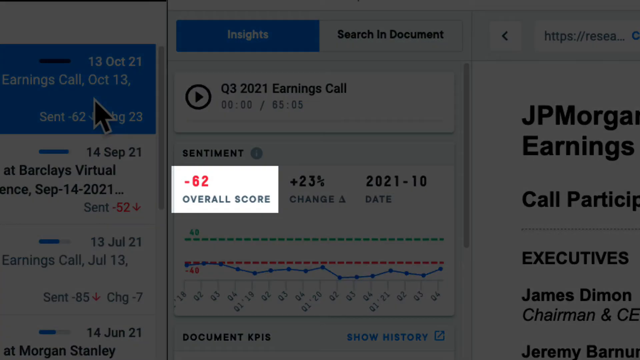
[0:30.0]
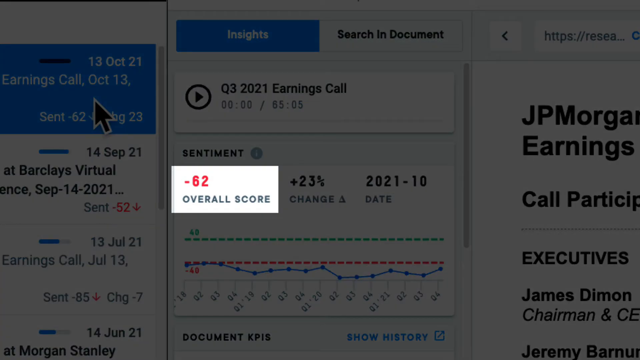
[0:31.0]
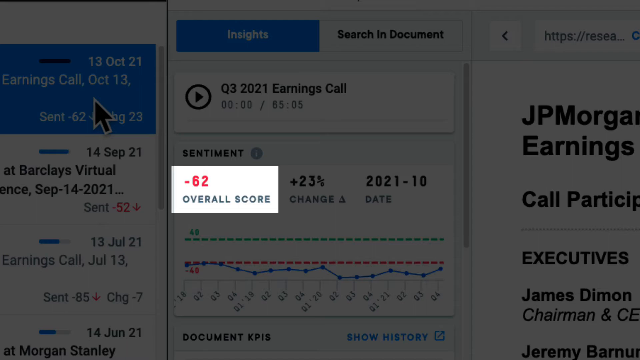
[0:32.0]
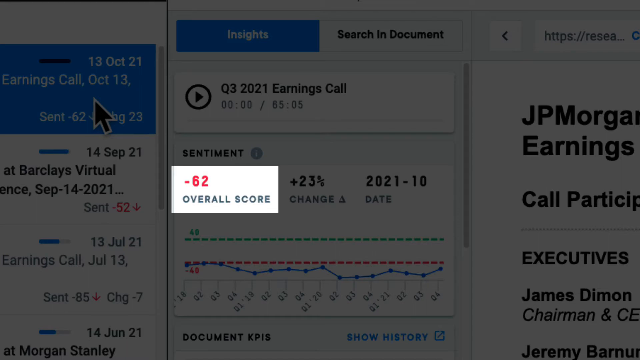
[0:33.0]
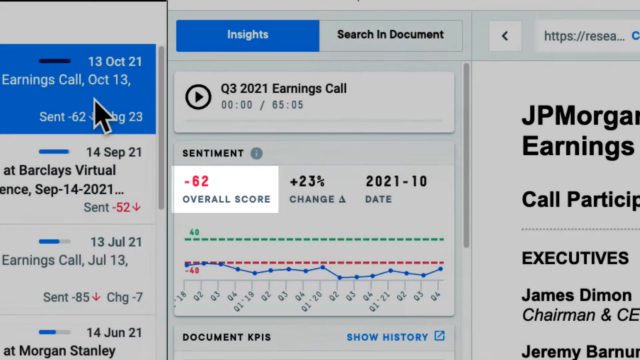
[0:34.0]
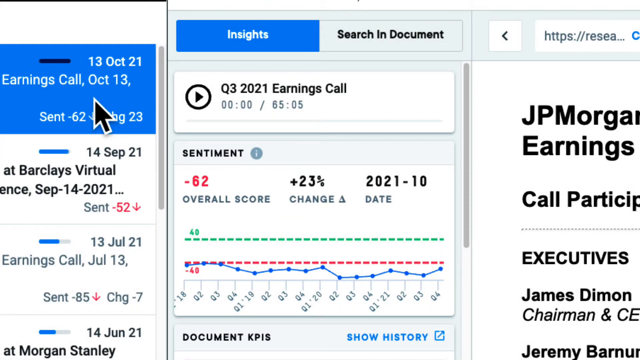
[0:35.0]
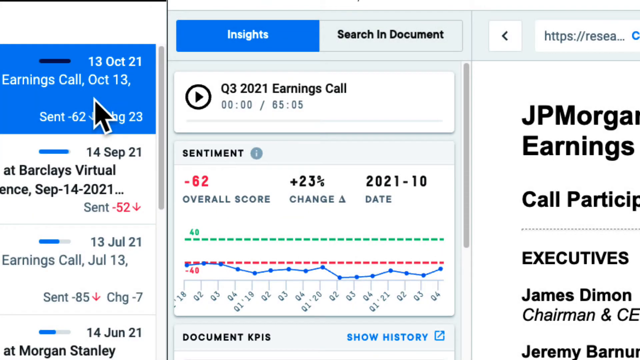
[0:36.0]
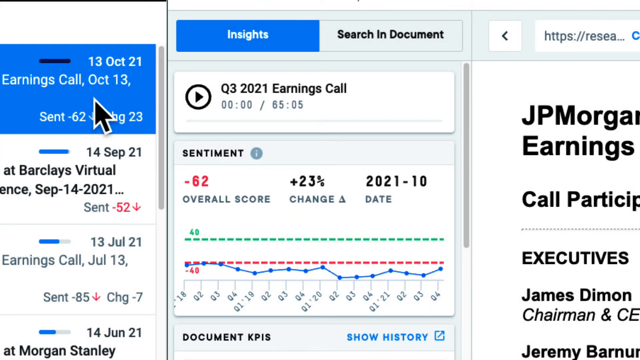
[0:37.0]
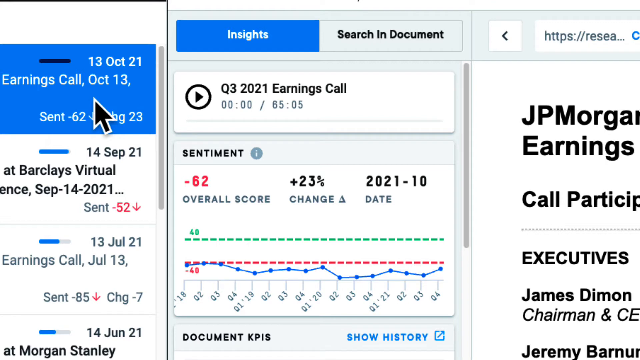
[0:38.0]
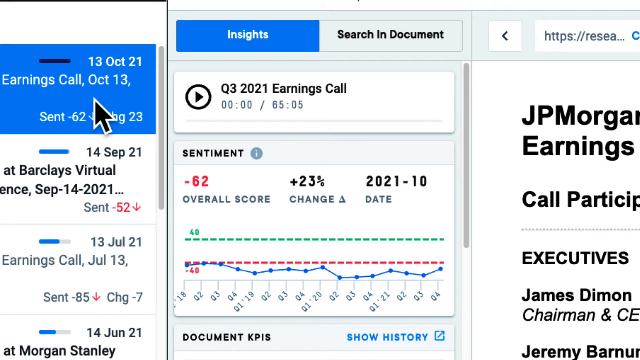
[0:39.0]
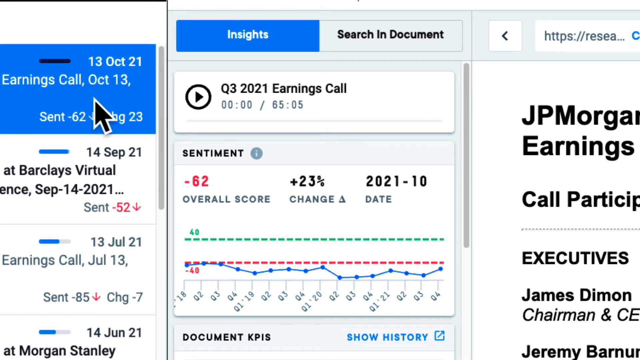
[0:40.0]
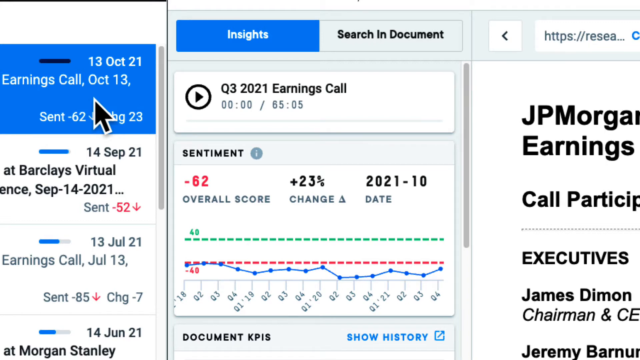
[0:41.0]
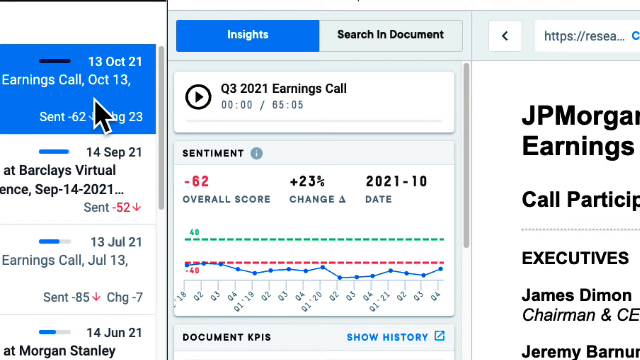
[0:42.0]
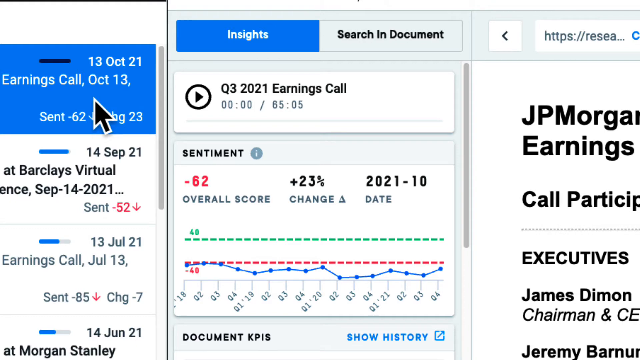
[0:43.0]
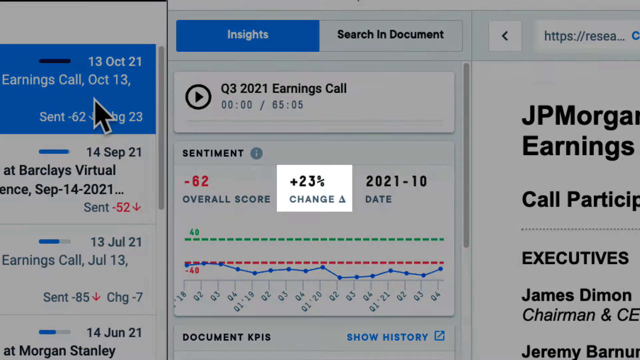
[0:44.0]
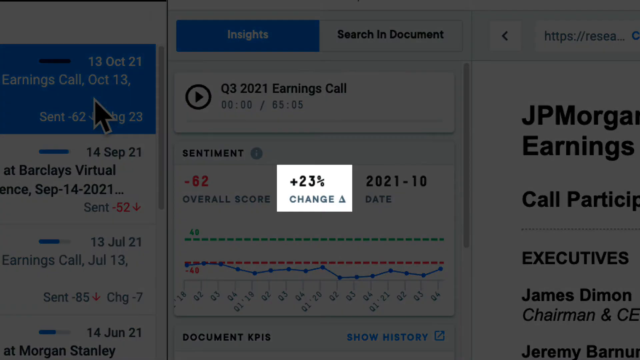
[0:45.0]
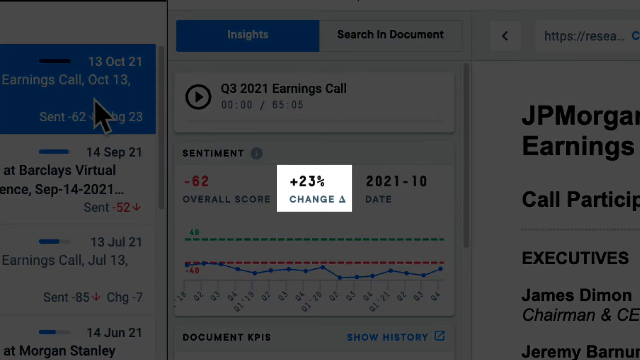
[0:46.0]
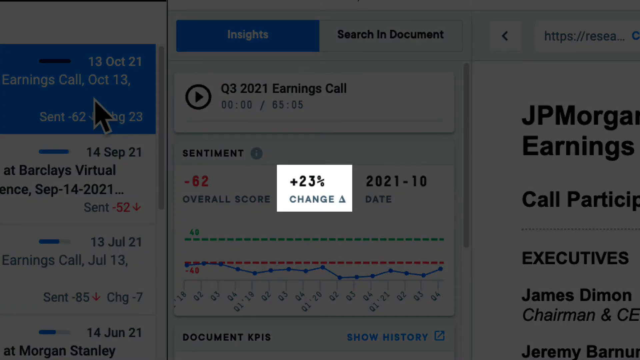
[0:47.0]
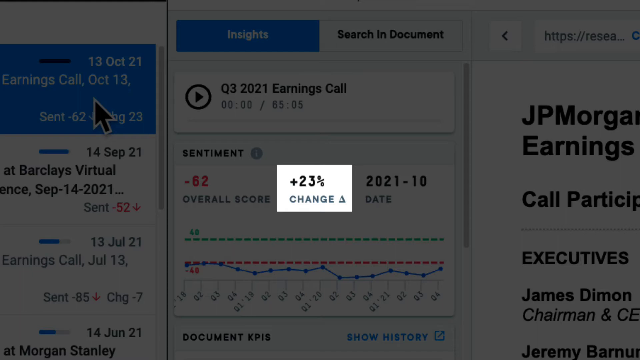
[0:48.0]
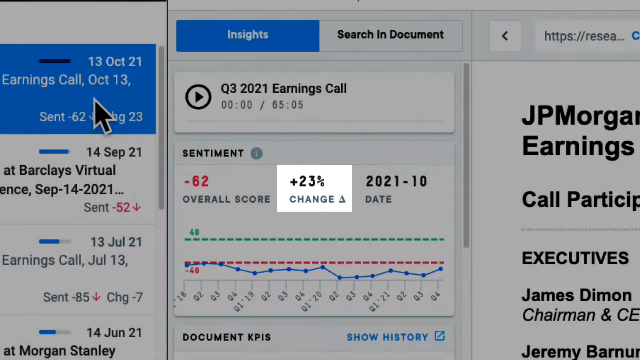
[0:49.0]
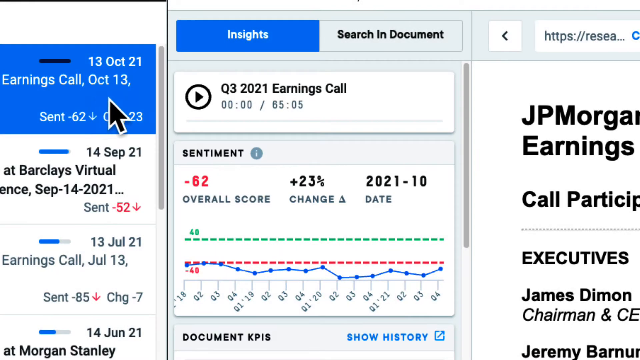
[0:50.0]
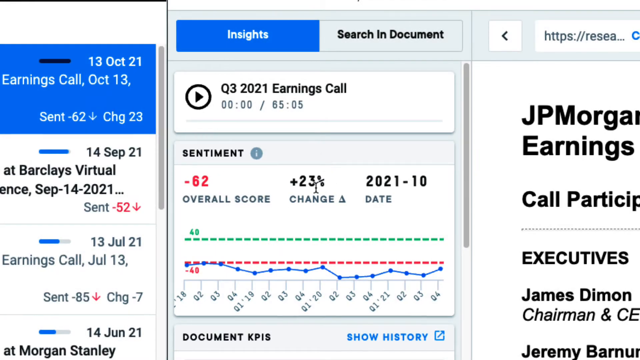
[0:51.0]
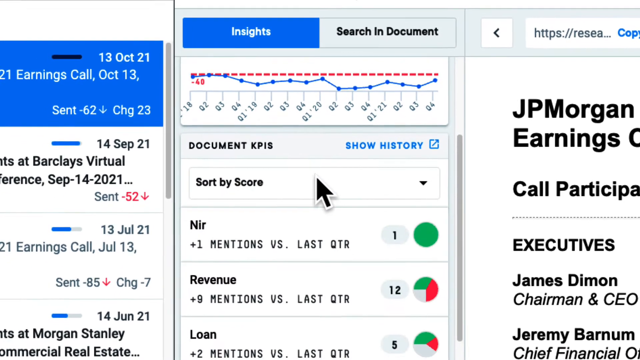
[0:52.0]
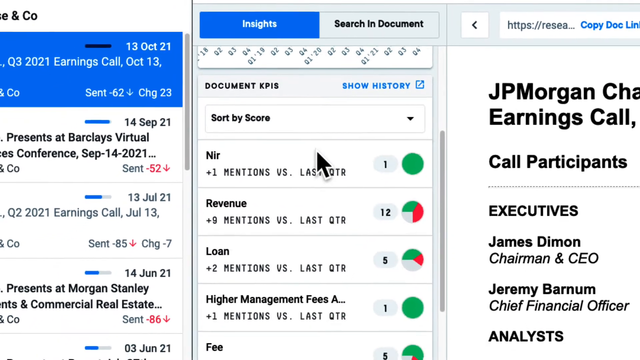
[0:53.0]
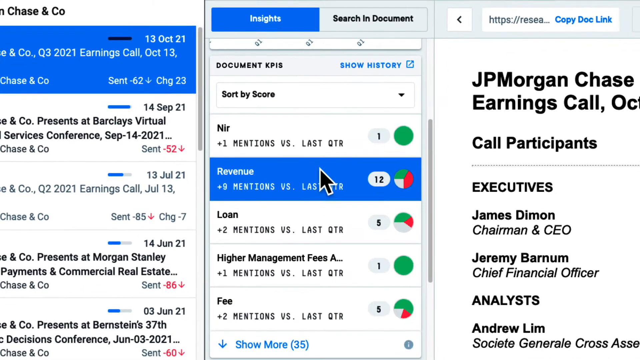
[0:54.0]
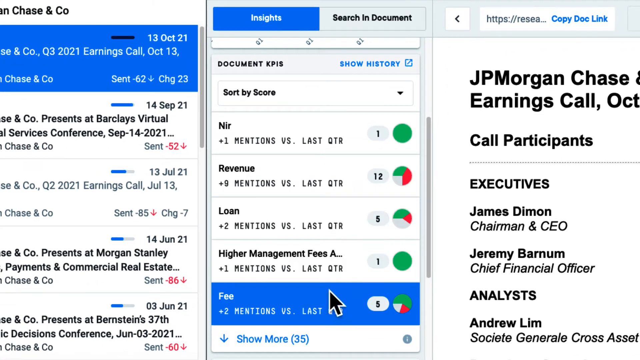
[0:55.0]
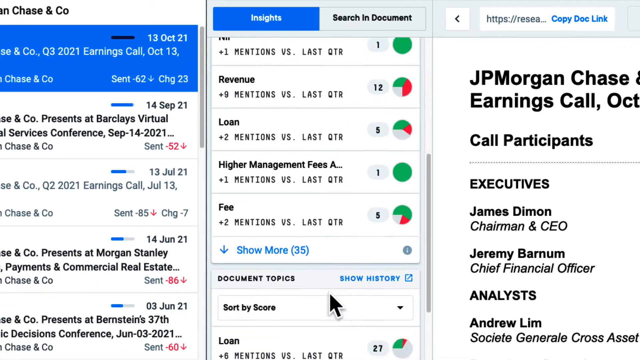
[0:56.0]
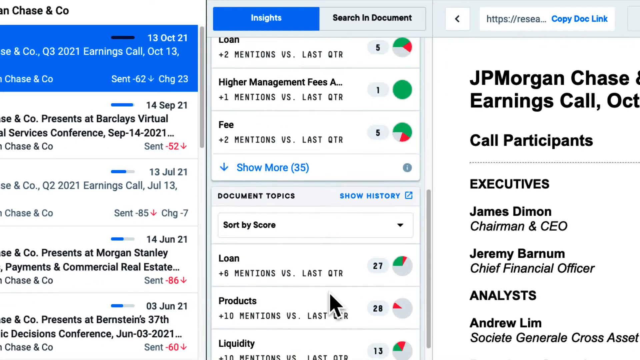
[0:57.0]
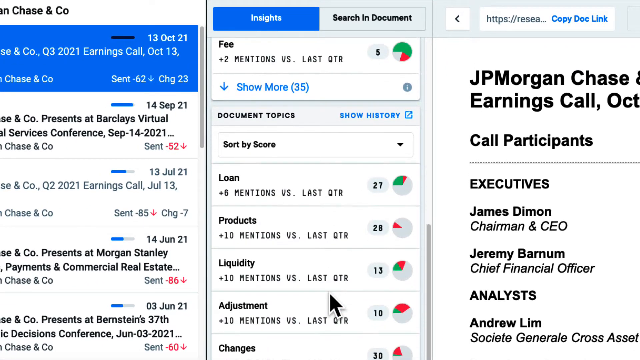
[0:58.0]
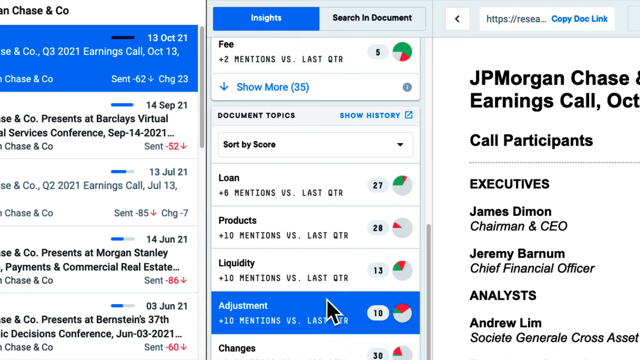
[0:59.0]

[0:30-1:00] A white box appears over a shadowed-out page behind it, showing negative 62 in red print with the all-caps dark gray wording "overall score" below. Everything then lightens back to white: the earnings call of October 13th, 2021 is still at the top left, with the same graphic in the center, and an arrow points to that top left box. The page dims again and shows the plus 2.3% change in a white rectangle in the center. The page then returns to fully lit with no white box, and the arrow points to the Q3 2021 earnings call at the top center. Several things are clicked and the page scrolls downward, then goes back up.